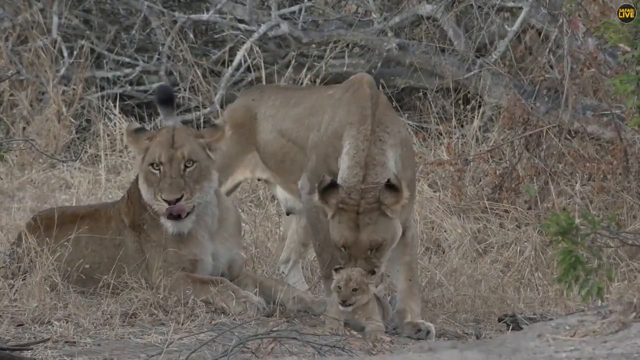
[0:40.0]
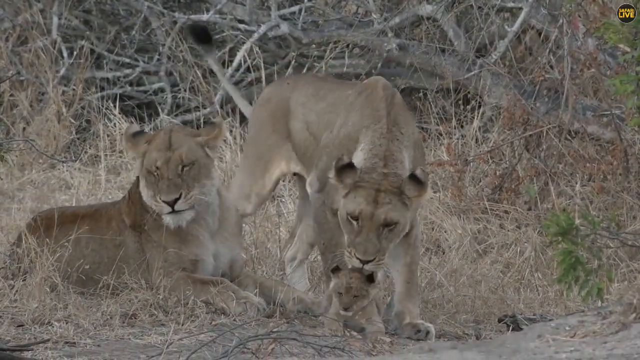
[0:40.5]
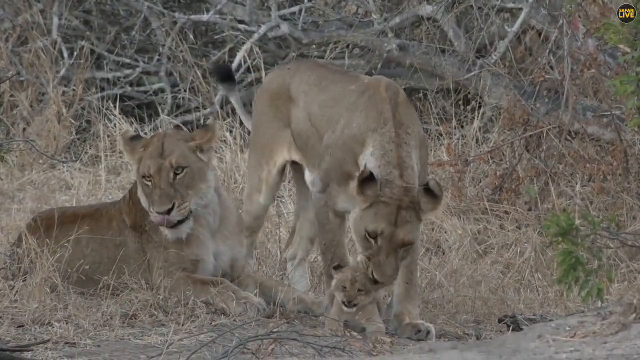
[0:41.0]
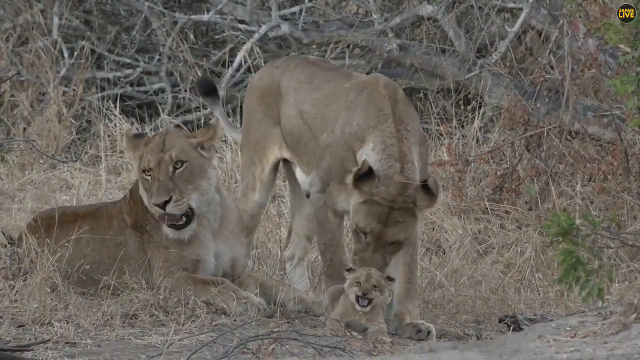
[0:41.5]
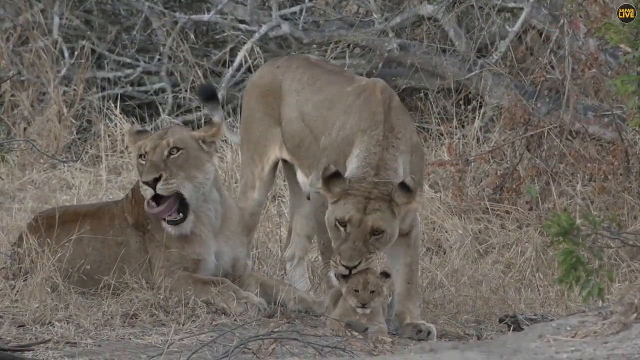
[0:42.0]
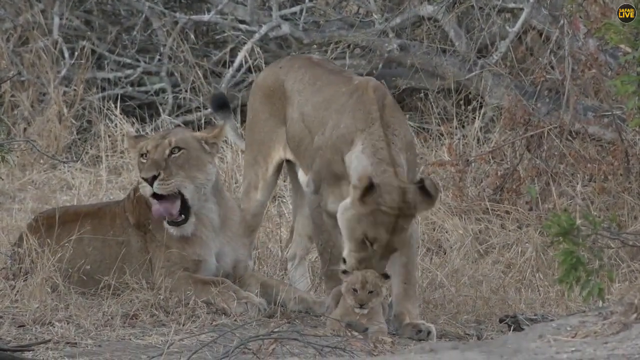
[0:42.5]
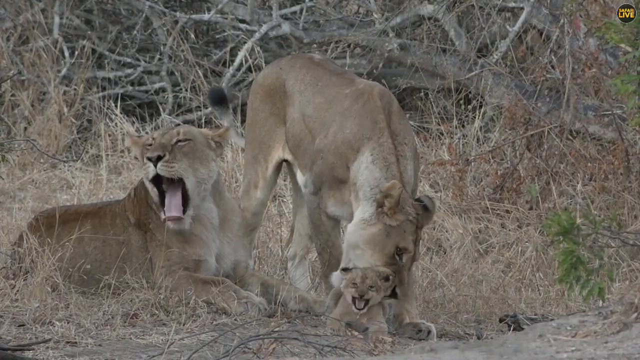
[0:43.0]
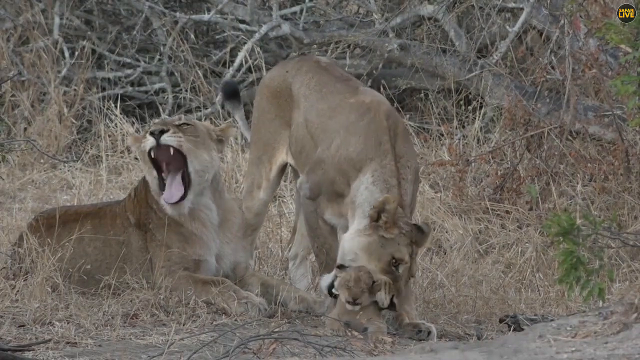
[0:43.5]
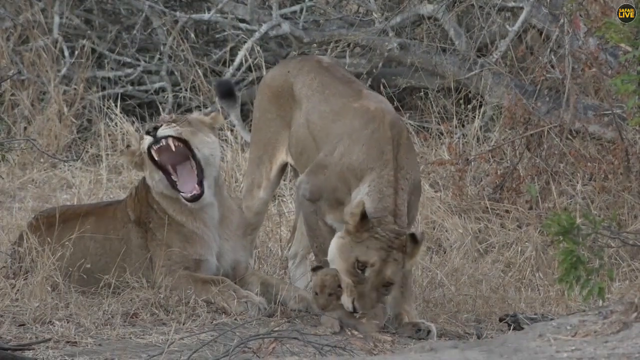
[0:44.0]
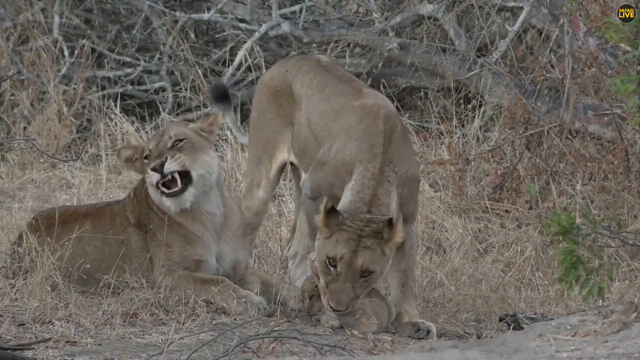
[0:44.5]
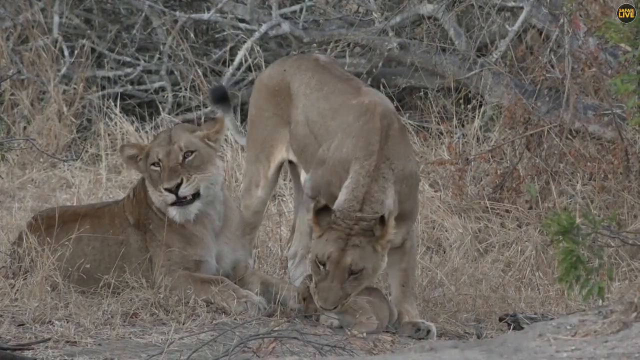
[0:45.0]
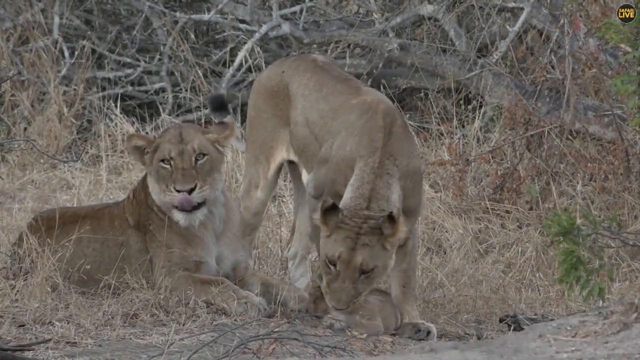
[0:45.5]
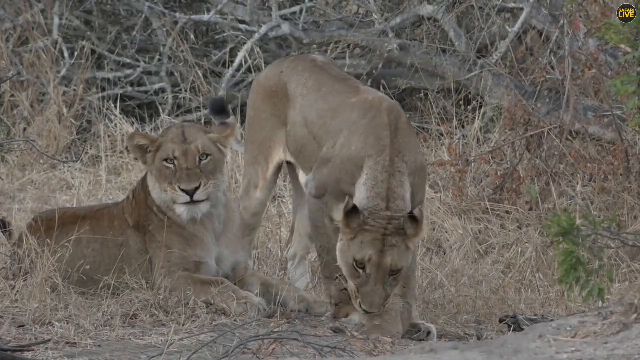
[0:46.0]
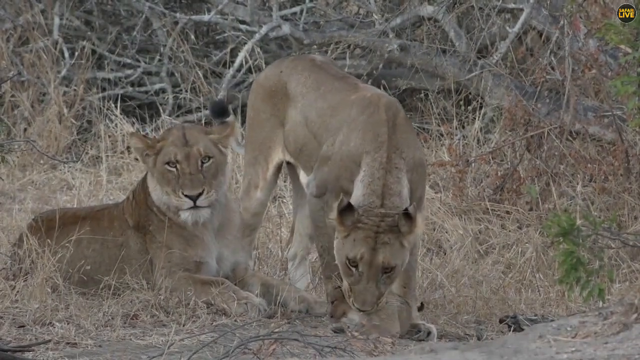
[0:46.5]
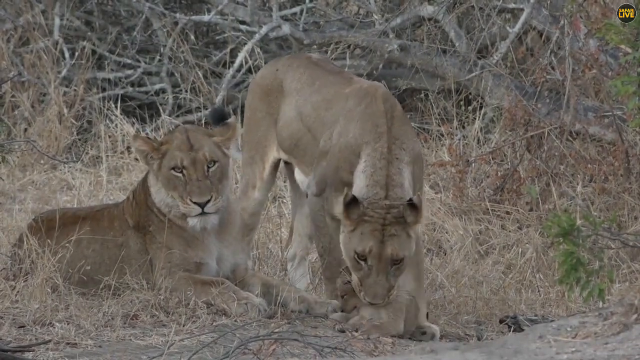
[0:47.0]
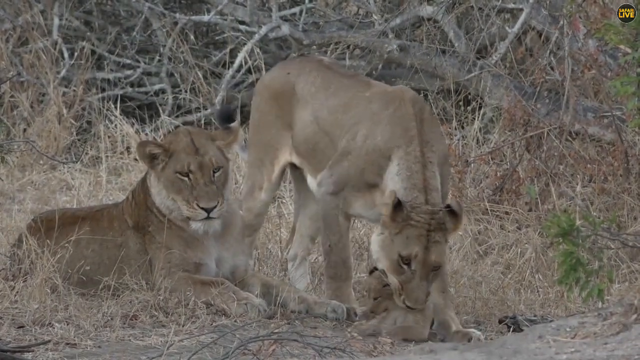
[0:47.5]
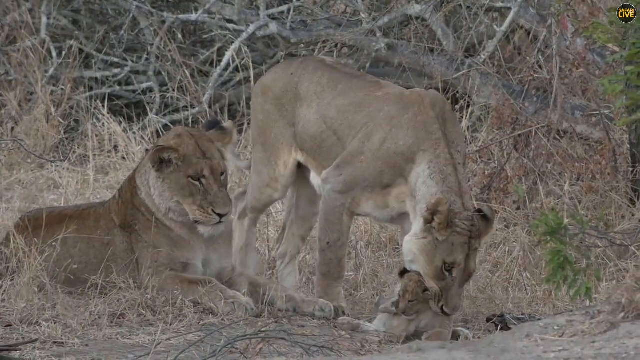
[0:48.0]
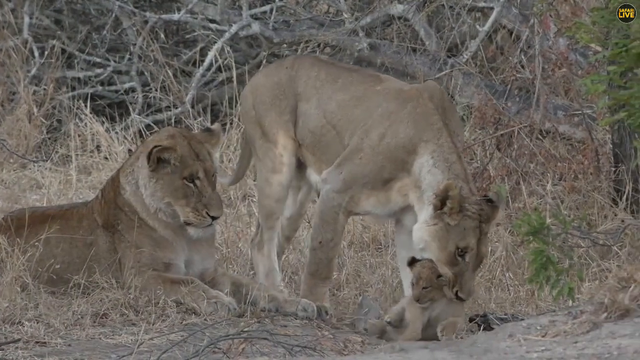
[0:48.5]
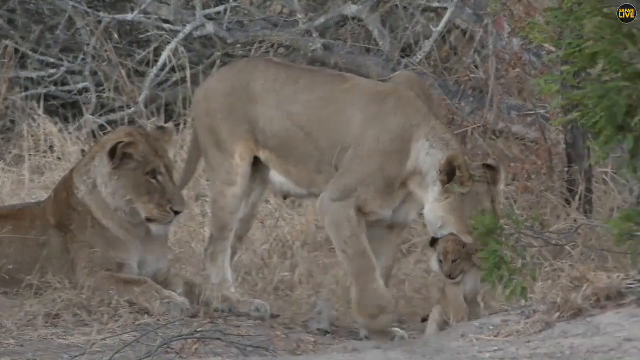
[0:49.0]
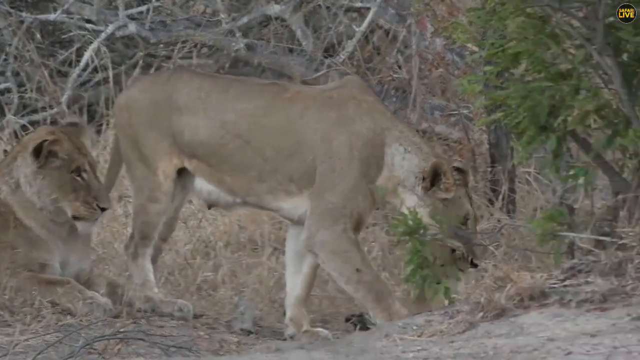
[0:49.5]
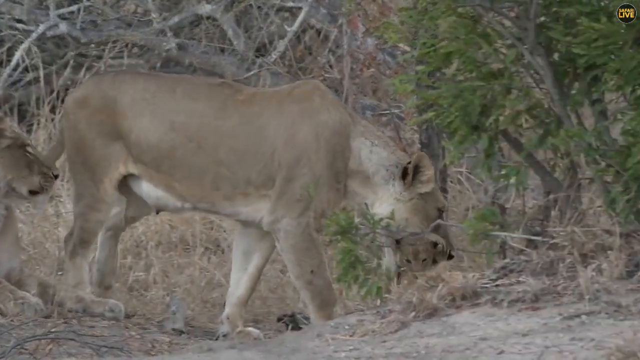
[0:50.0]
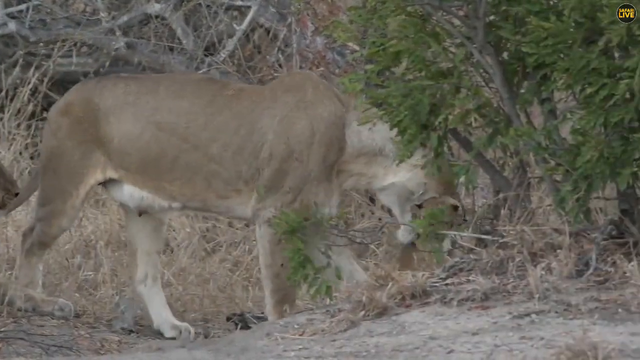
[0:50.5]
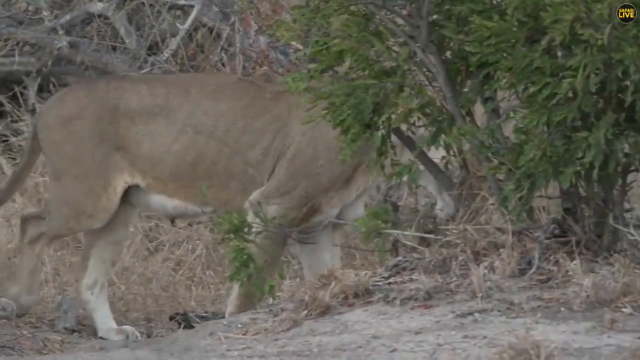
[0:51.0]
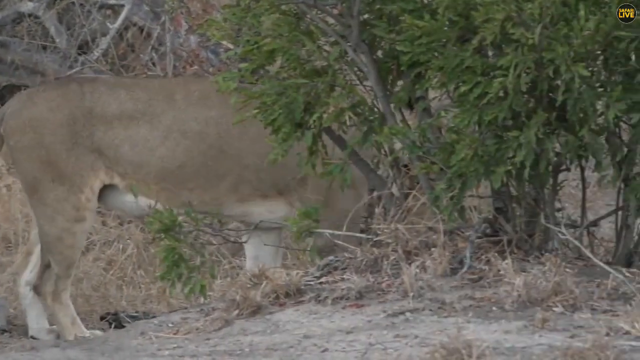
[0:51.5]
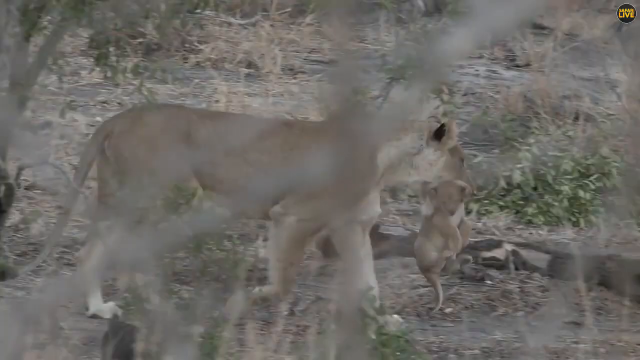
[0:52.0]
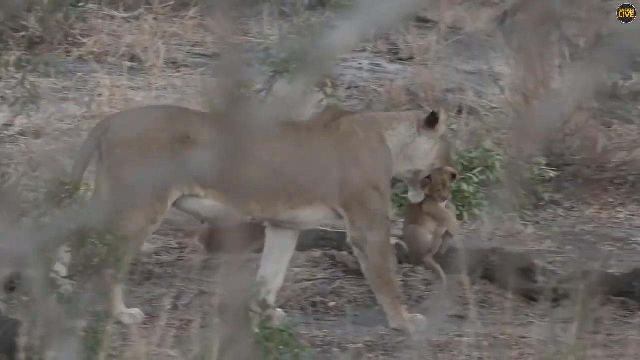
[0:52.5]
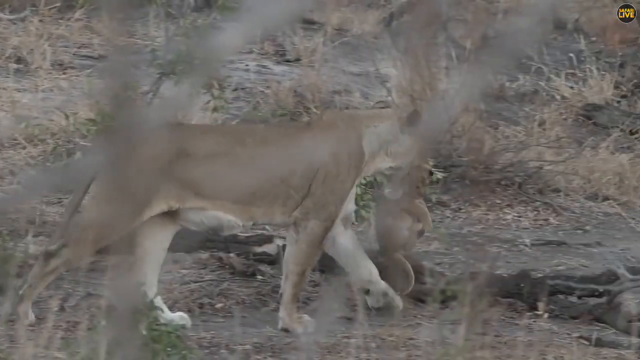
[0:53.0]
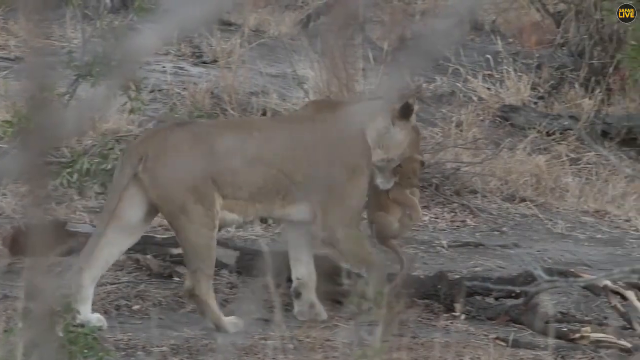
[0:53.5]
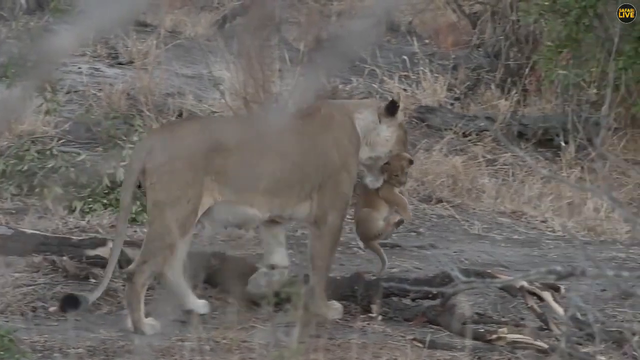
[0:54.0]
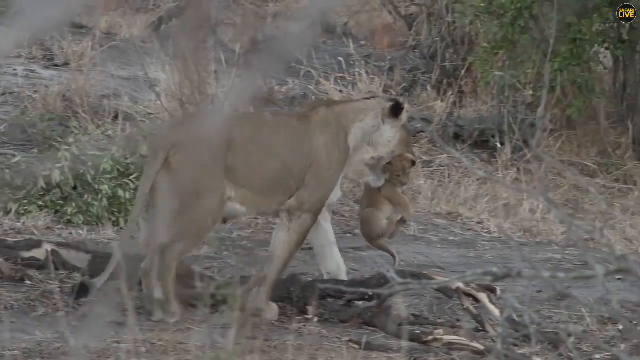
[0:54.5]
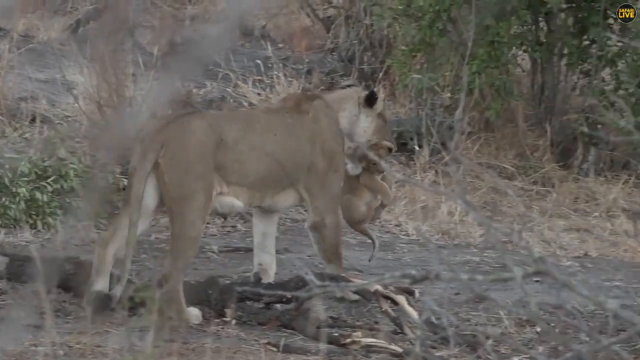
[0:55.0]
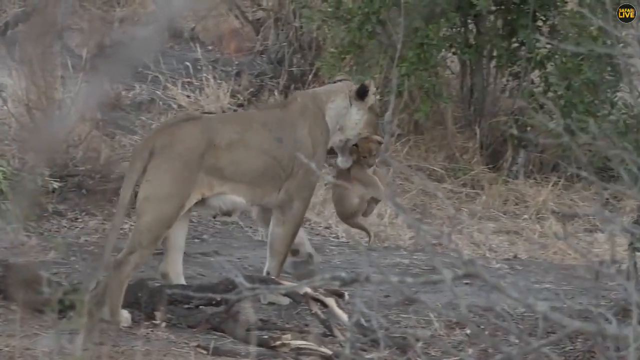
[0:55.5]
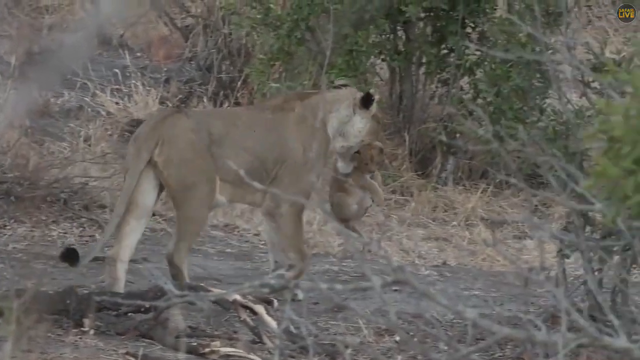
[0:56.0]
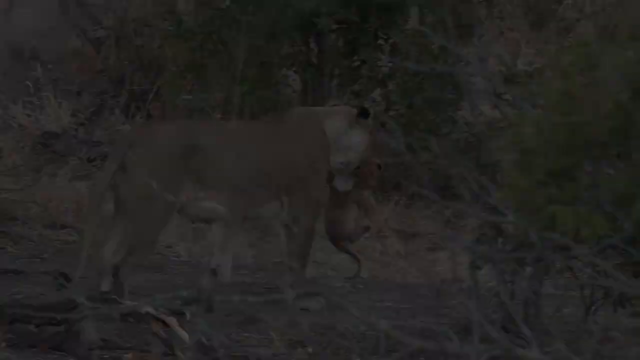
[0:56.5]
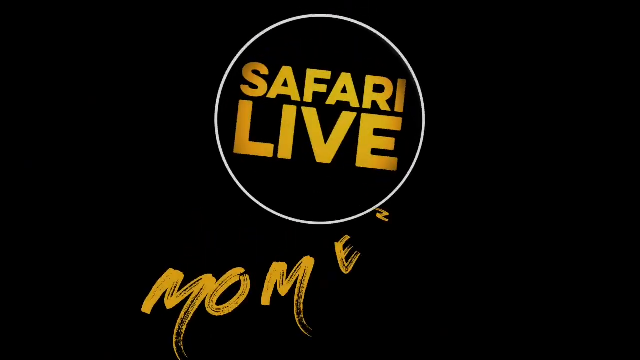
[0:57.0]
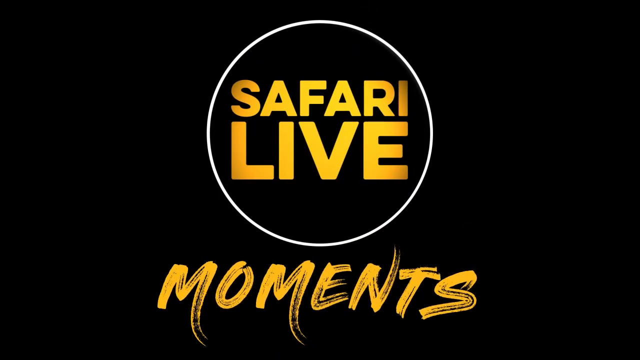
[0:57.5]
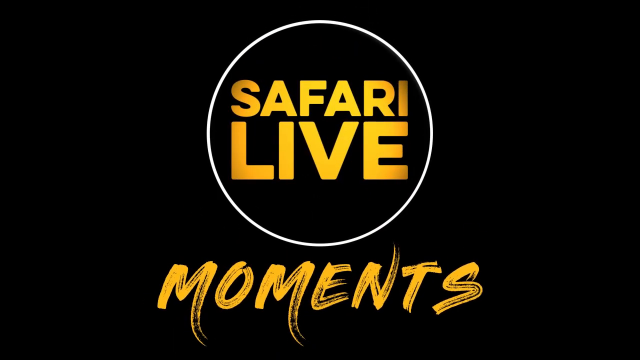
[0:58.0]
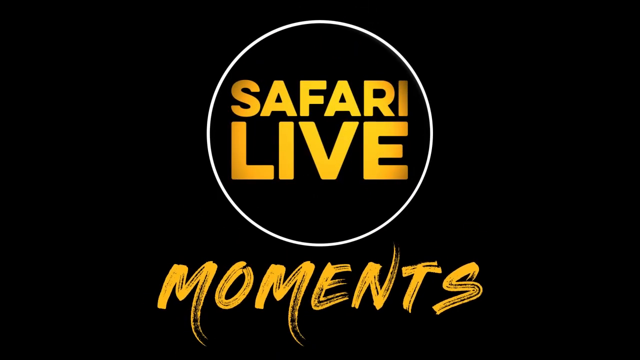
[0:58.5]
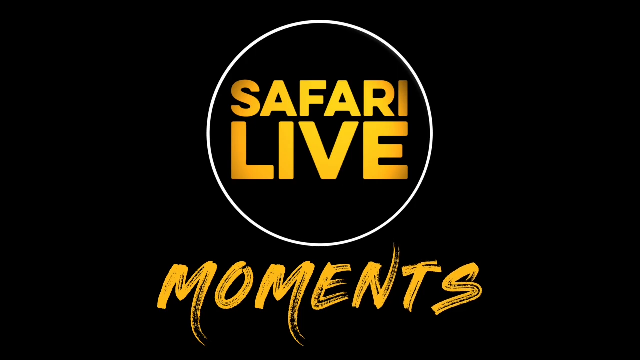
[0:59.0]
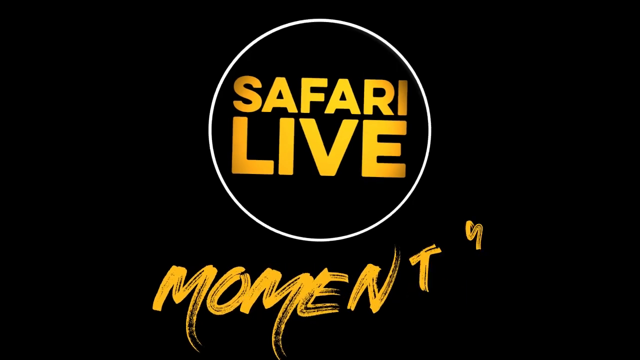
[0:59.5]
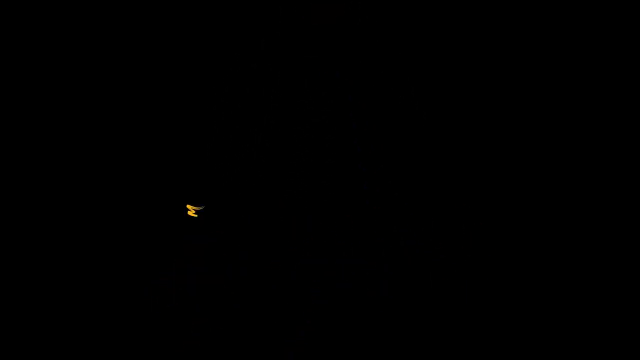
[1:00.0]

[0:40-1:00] Three lions are present: two adult females and a cub. One female is lying down while the other stands and licks the cub. The lying lion seems rather bored, yawning and kind of looking around, and she makes eye contact with the camera. The other lion continues to lick and nip at the cub, which opens its mouth as if roaring. She then picks the cub up by the nape of its neck and begins to walk away with it, kind of disappearing from view. The camera cuts to a different viewpoint: she is kind of walking through a savannah with a lot of trees, holding the cub in her mouth by the nape of the neck, moving away as the camera kind of traces her. The other lion is no longer seen; the focus is only on the mother lion with the little cub.